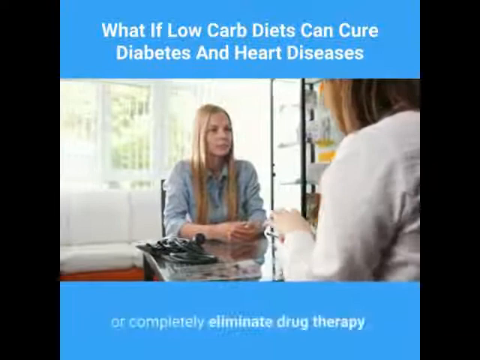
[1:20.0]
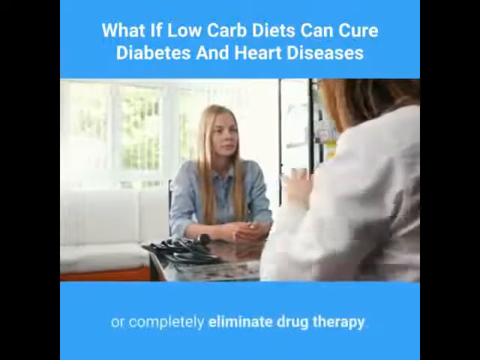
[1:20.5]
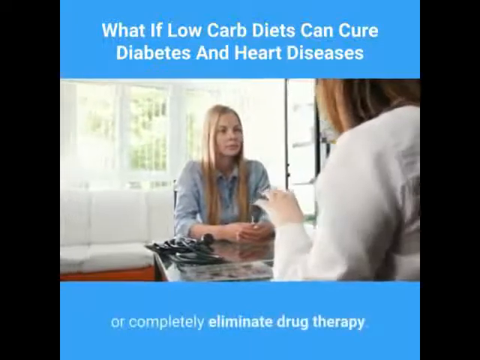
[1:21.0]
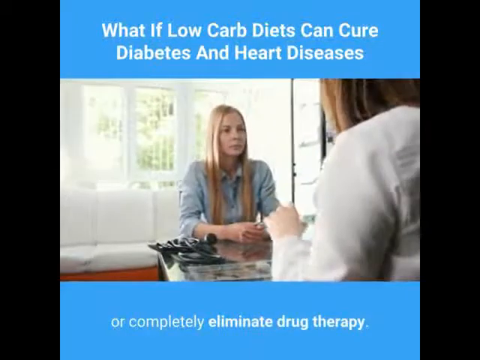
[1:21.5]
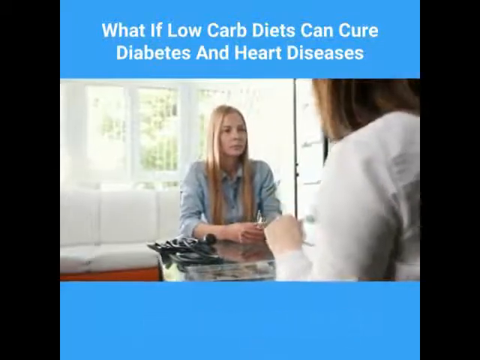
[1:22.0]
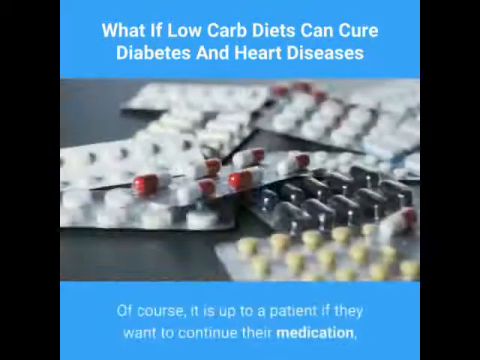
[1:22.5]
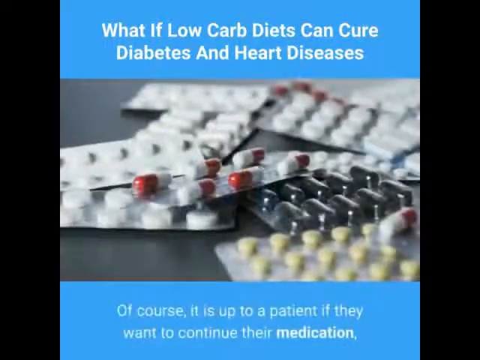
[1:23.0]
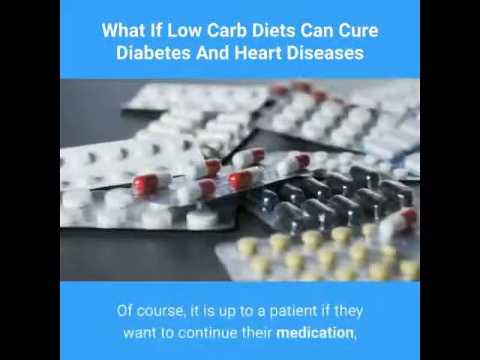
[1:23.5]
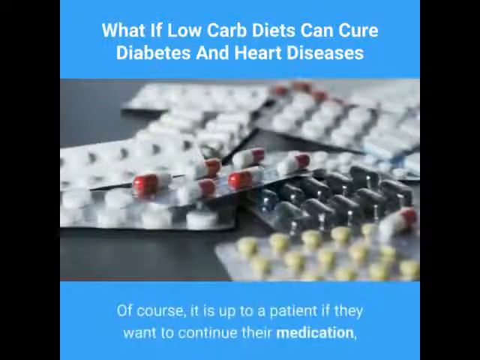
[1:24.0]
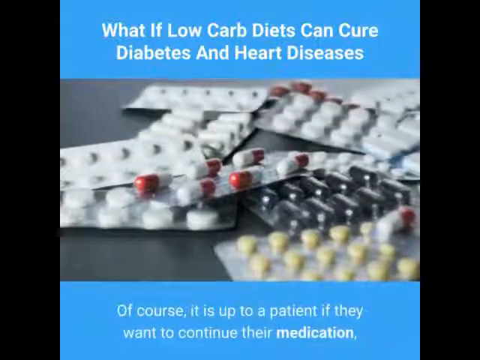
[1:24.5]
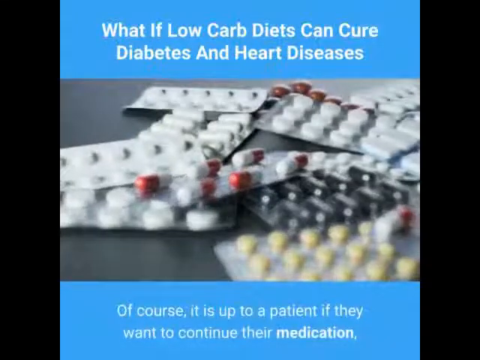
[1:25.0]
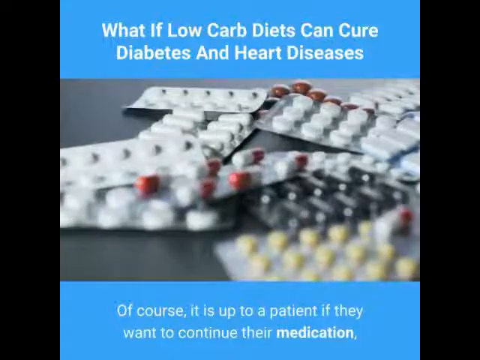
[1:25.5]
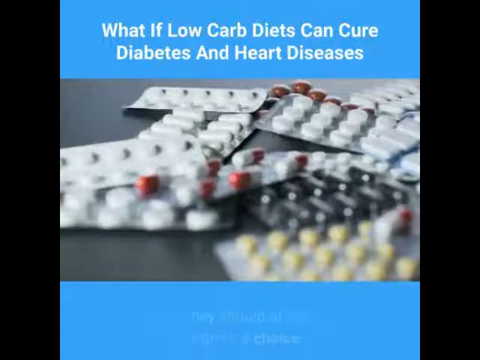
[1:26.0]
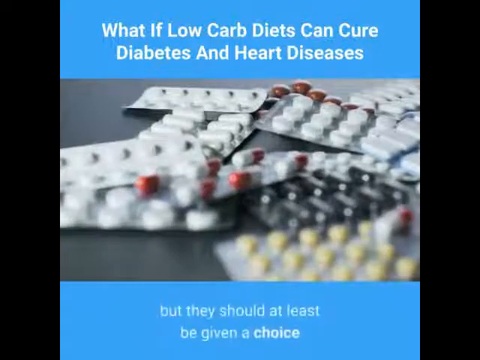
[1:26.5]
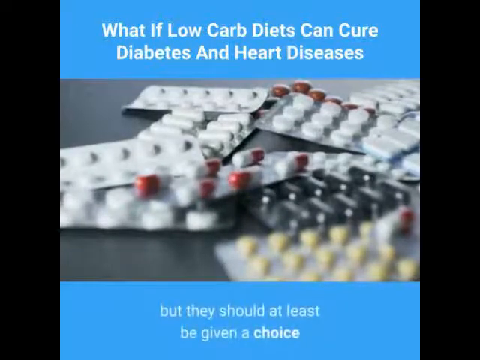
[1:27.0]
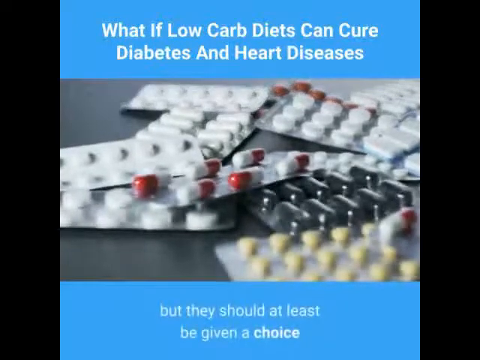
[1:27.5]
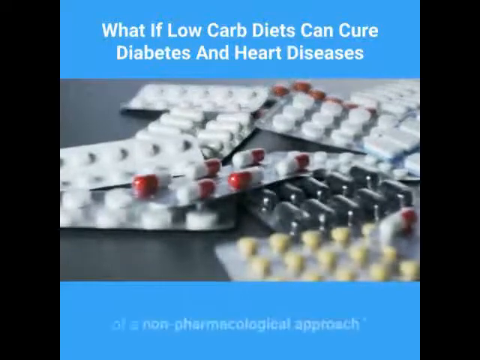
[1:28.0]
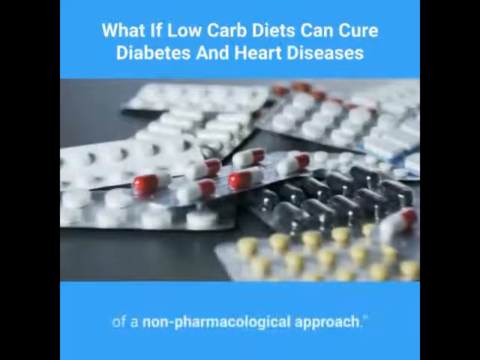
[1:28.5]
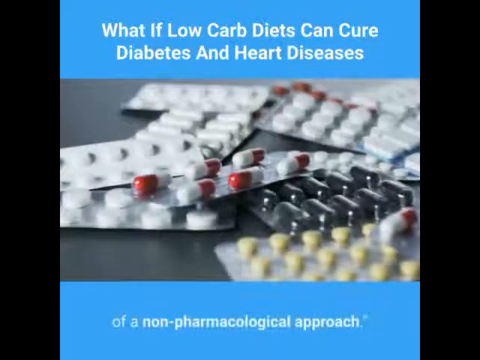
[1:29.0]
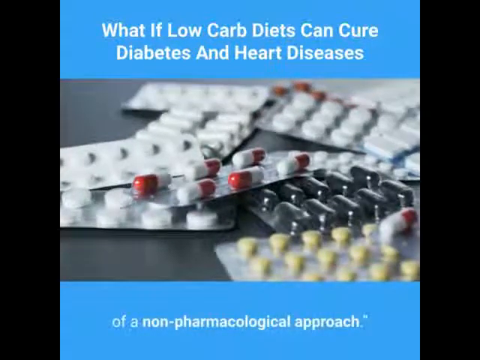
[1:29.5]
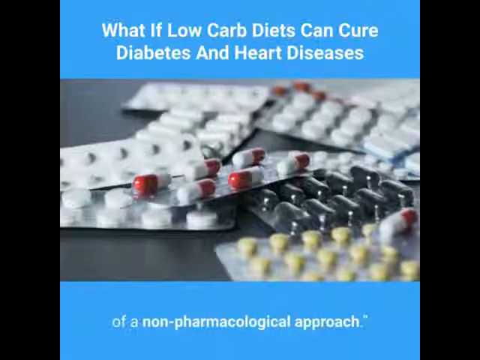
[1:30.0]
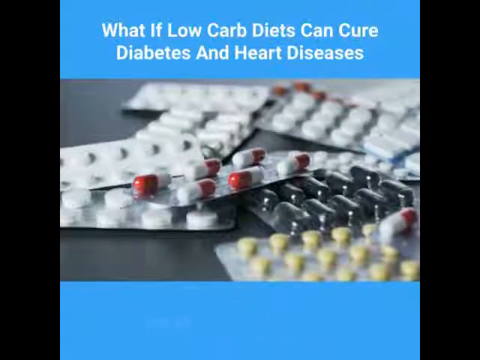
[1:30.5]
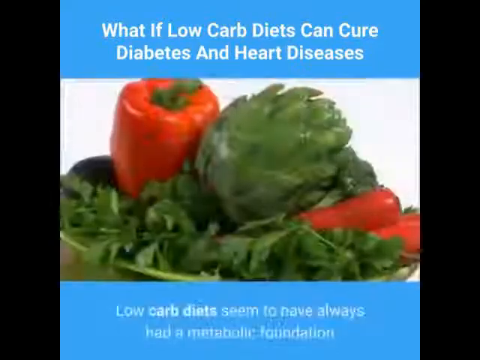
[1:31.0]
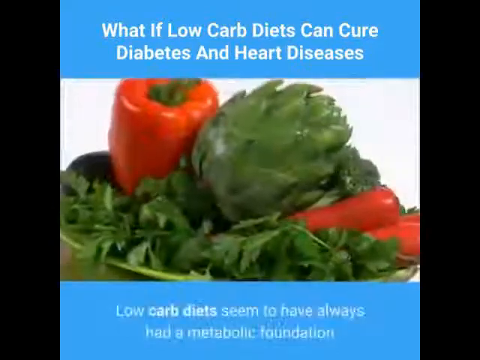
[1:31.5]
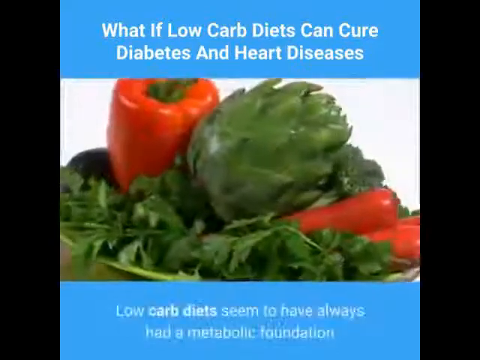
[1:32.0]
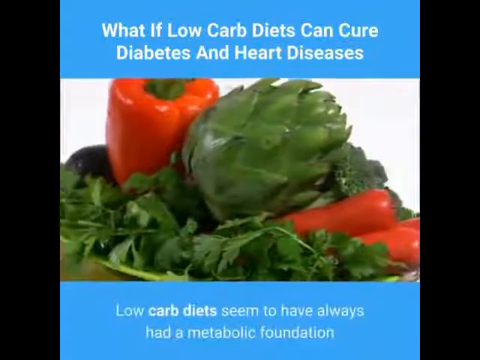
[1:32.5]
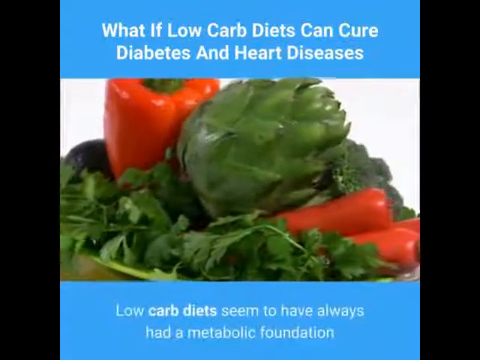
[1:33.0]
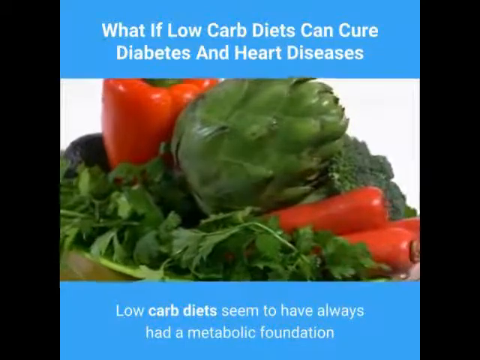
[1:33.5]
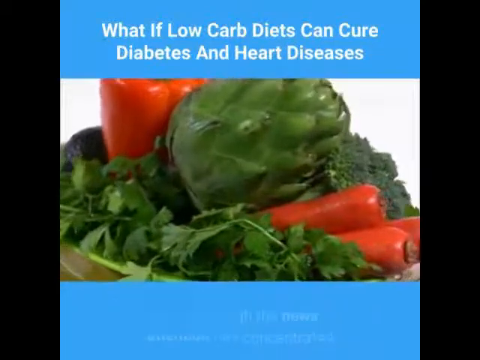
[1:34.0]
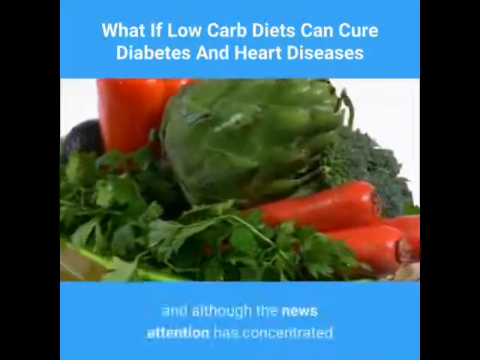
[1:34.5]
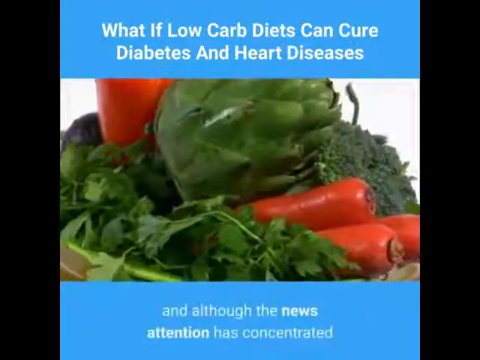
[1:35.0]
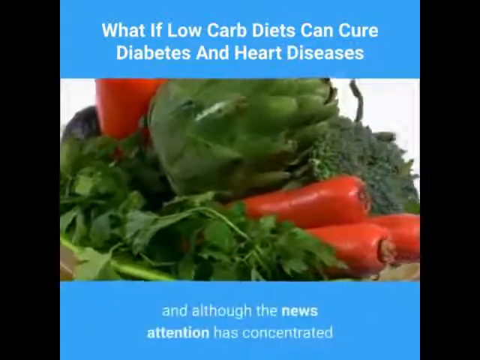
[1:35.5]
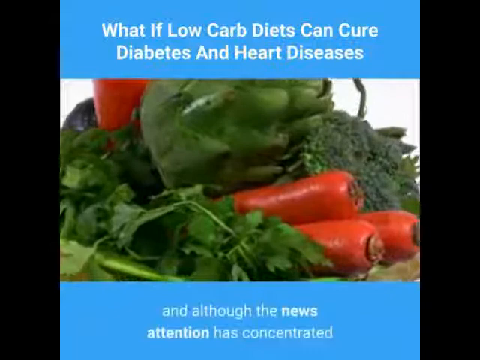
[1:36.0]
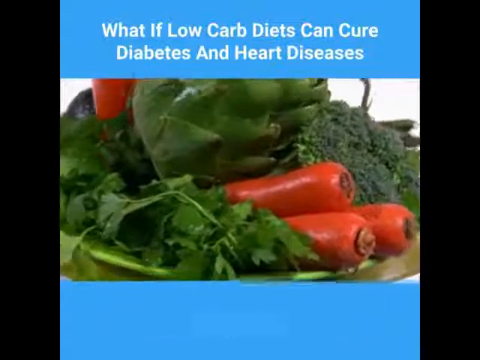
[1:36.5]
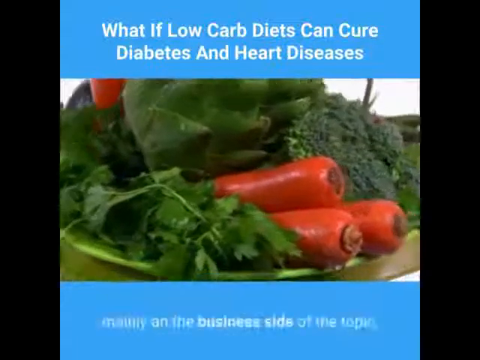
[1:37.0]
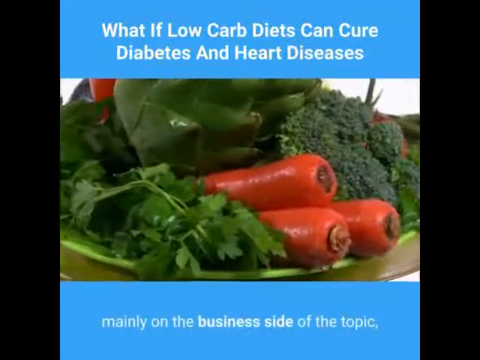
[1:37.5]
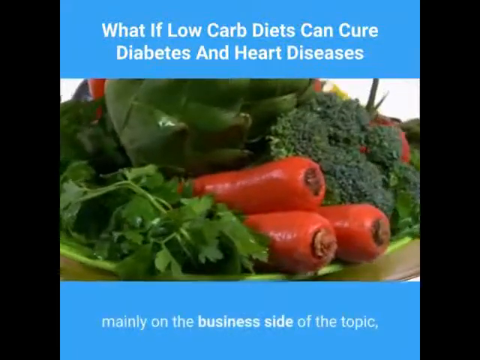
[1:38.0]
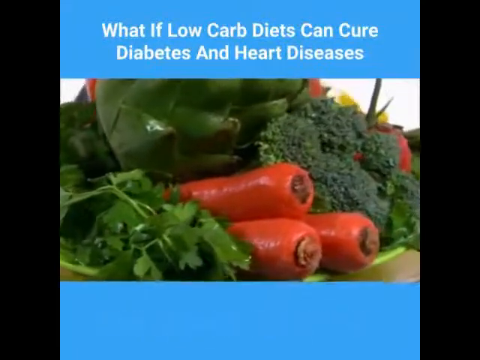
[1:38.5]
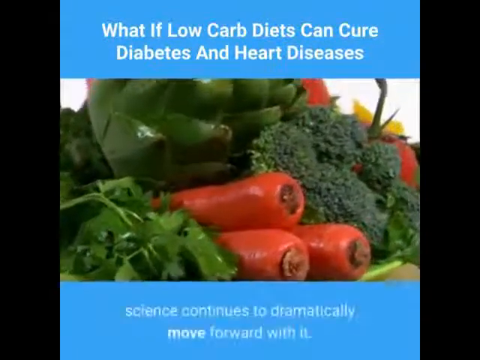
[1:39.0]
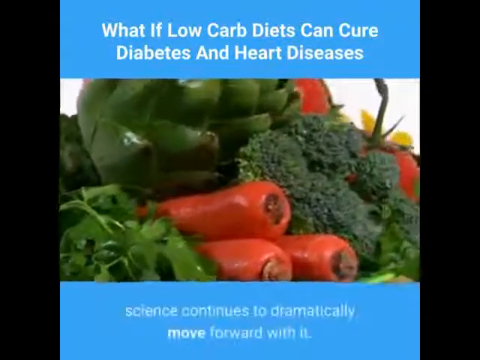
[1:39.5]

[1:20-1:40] A whole bunch of pills are spread out on a desk, in capsule form, each in its own pocket within a tray. Healthy foods are shown, such as red peppers, avocado, broccoli and carrots, and a plate of vegetables turns so they can be seen. A woman speaks with her doctor, sitting at a desk with her hands folded on it, listening intently. Behind her is a white couch and a window through which trees are visible outside, and there is a shelf between her and the doctor.